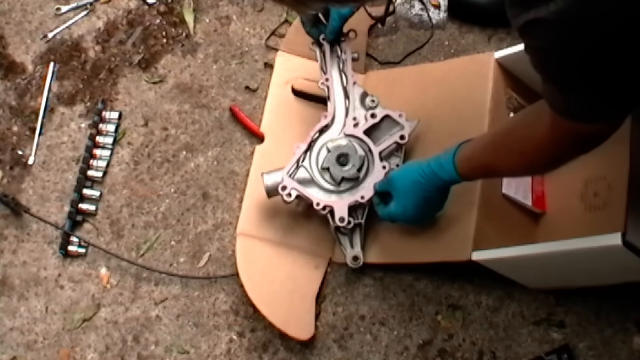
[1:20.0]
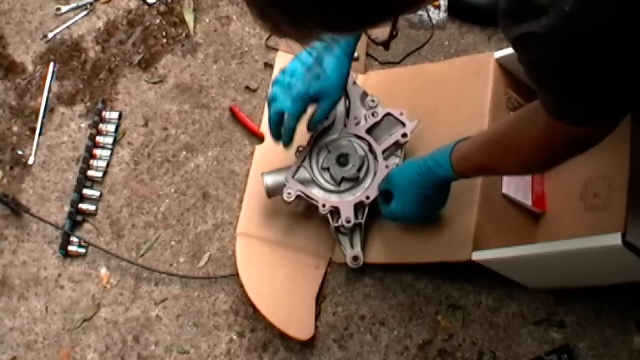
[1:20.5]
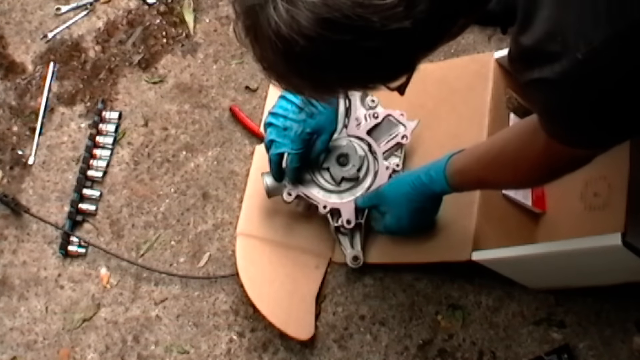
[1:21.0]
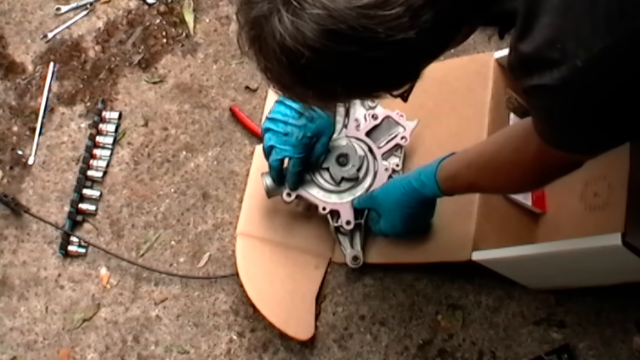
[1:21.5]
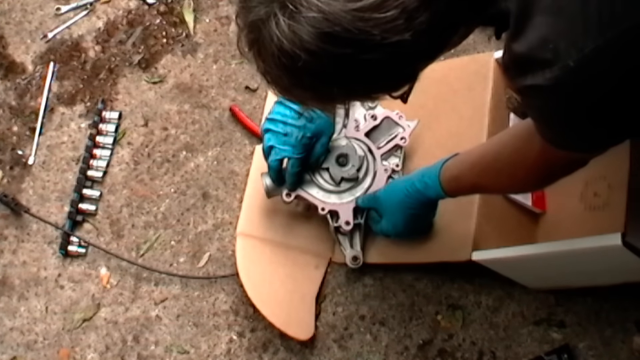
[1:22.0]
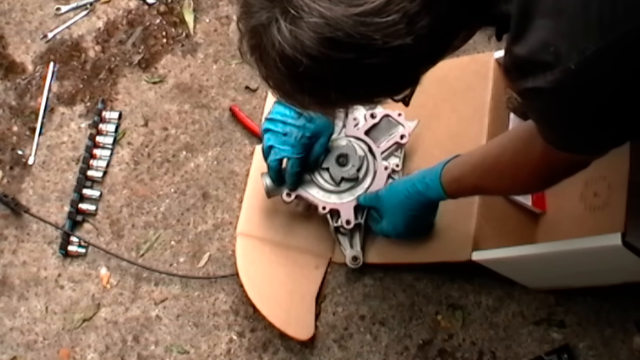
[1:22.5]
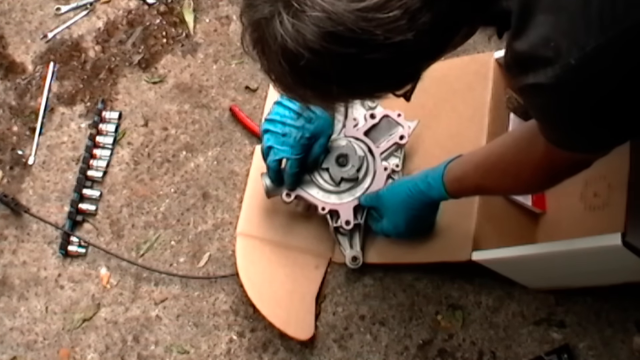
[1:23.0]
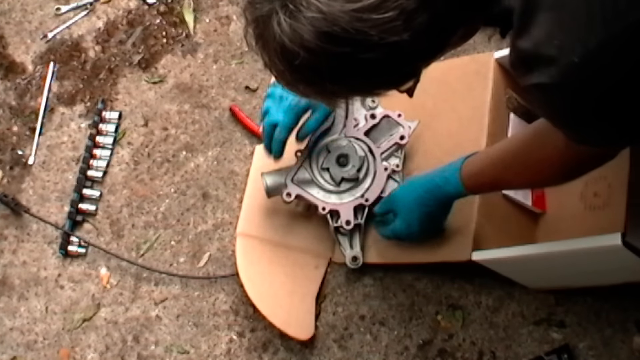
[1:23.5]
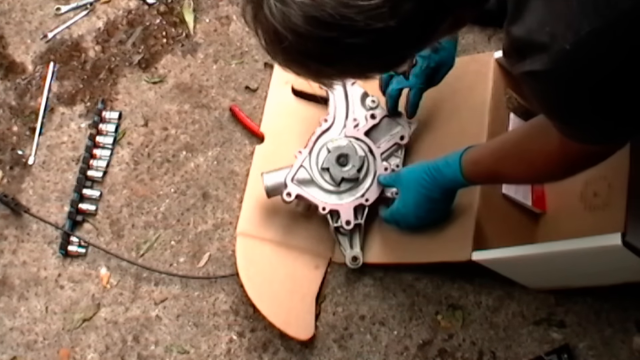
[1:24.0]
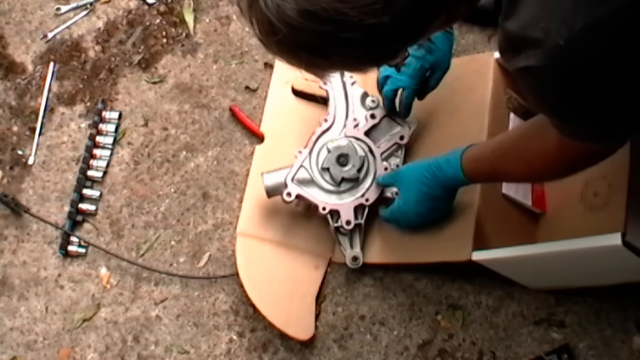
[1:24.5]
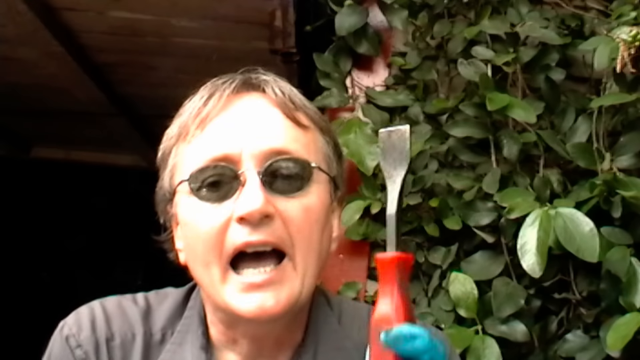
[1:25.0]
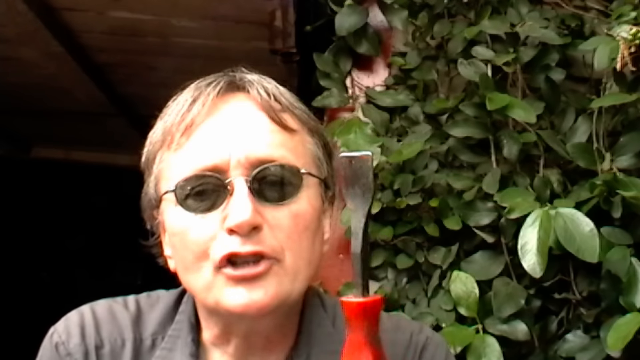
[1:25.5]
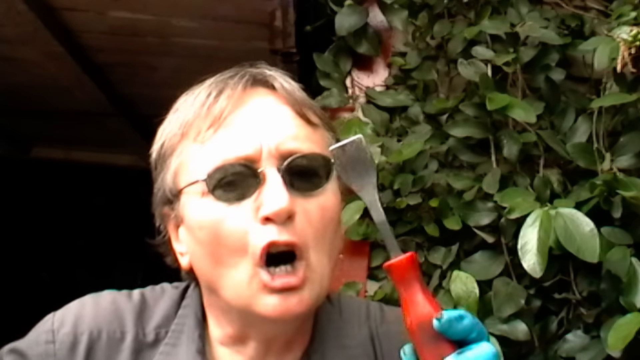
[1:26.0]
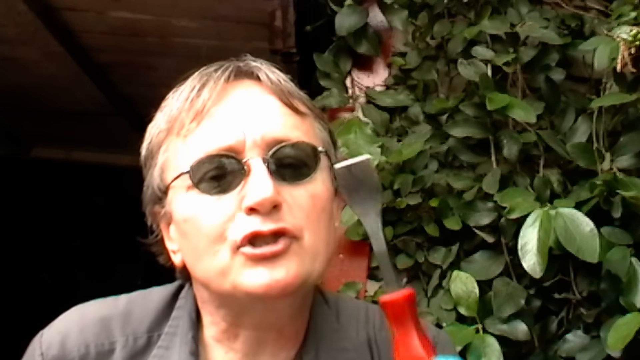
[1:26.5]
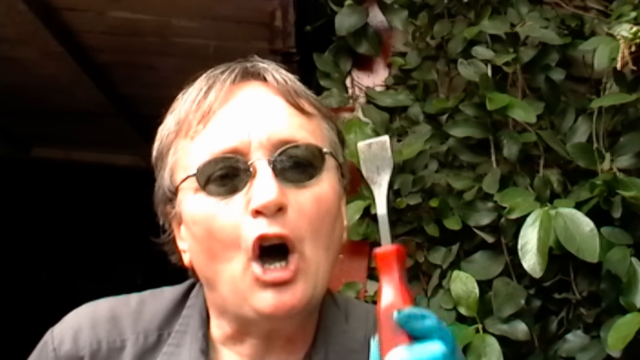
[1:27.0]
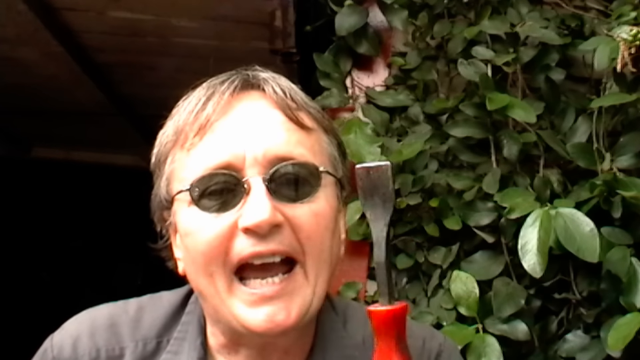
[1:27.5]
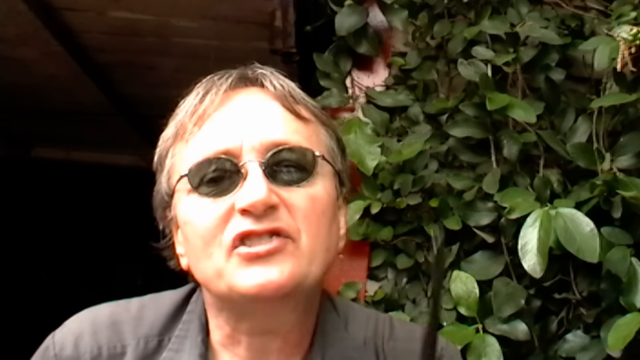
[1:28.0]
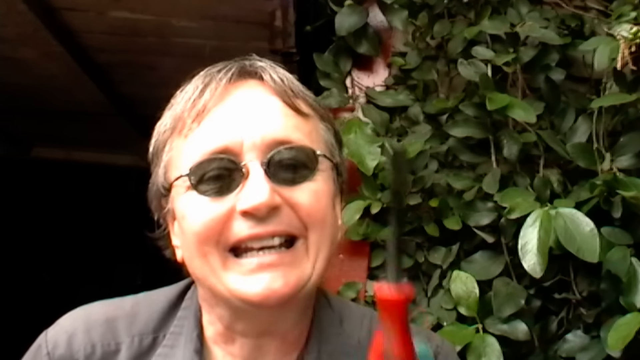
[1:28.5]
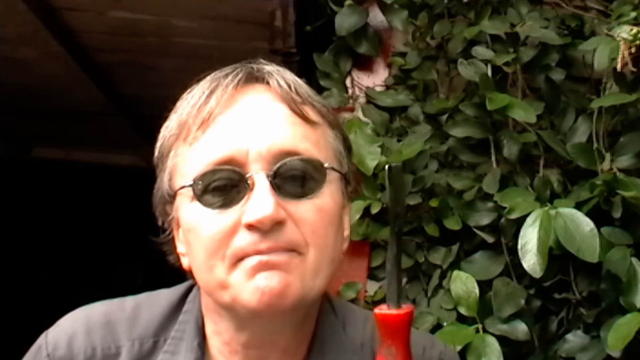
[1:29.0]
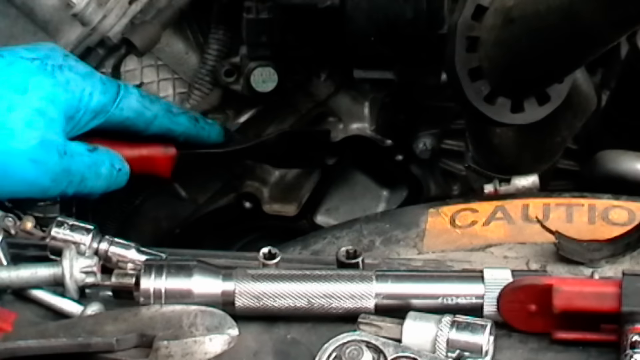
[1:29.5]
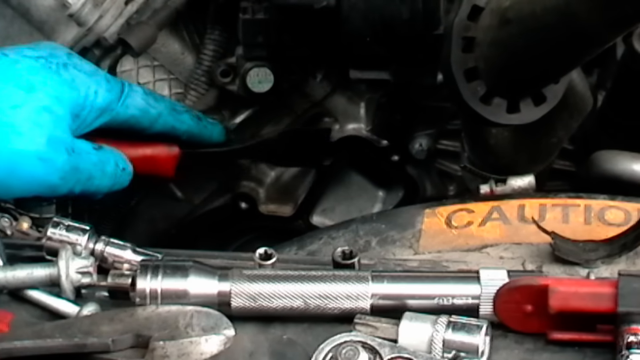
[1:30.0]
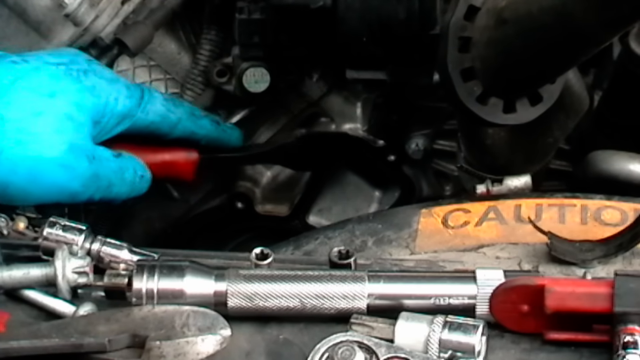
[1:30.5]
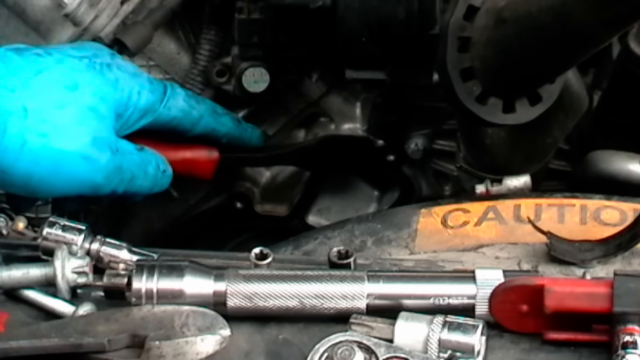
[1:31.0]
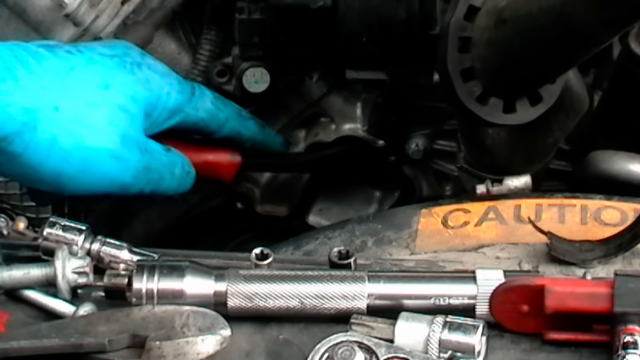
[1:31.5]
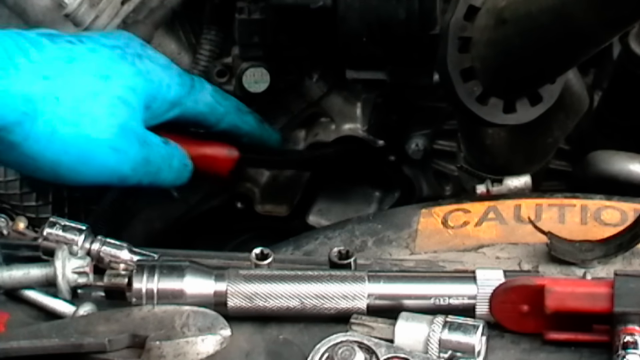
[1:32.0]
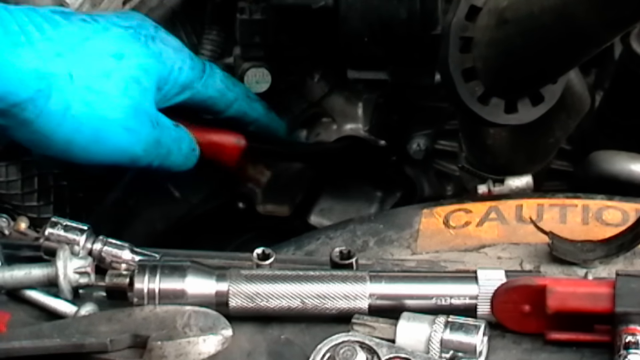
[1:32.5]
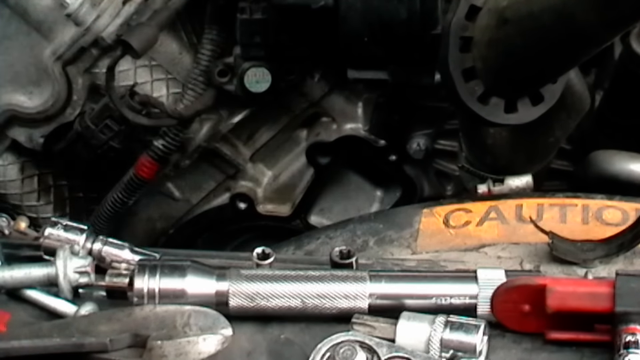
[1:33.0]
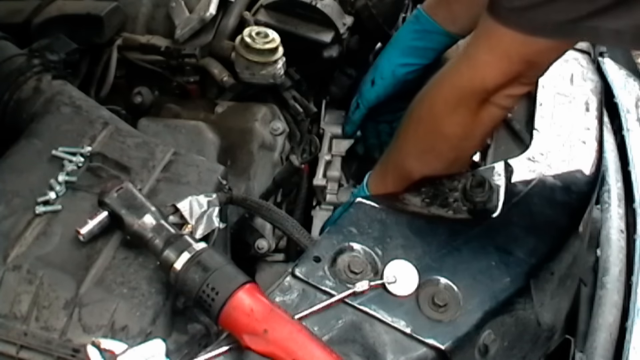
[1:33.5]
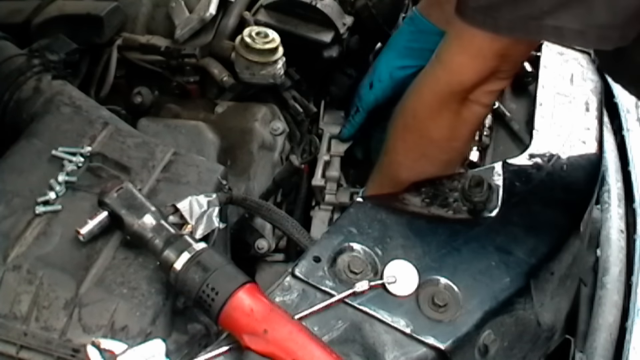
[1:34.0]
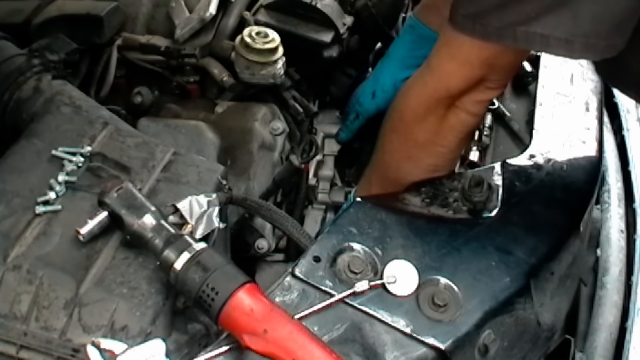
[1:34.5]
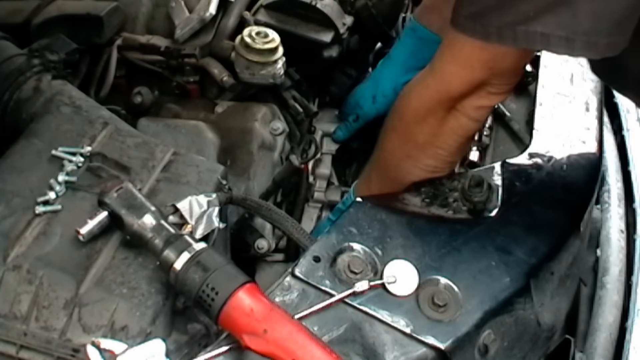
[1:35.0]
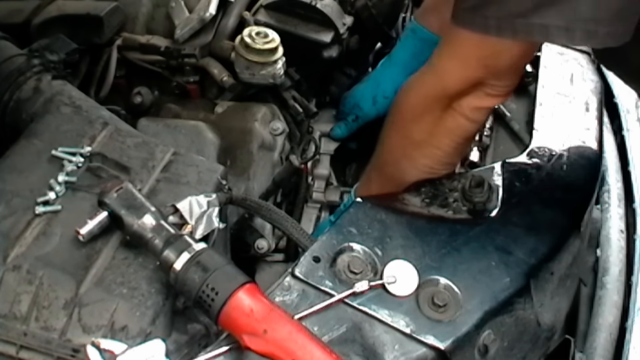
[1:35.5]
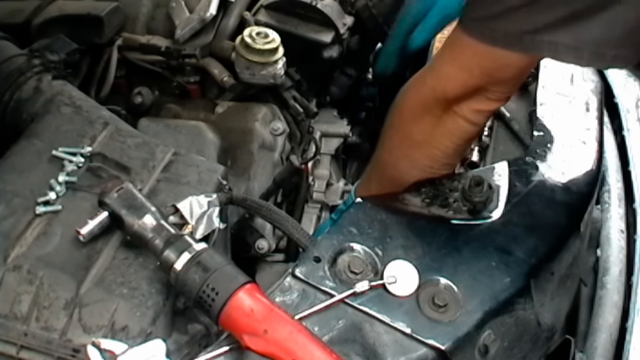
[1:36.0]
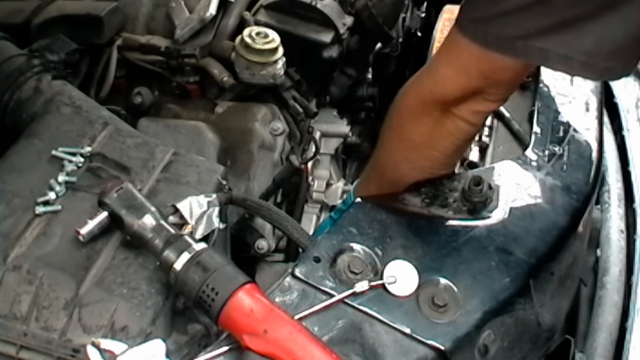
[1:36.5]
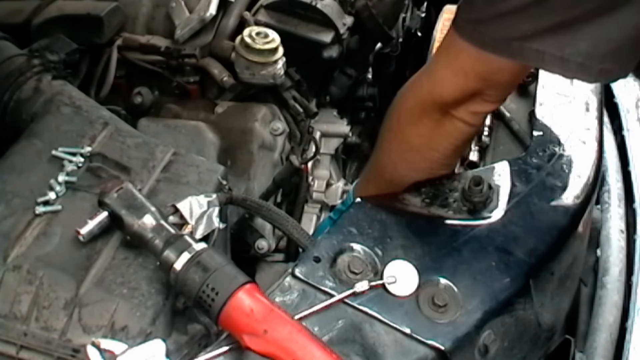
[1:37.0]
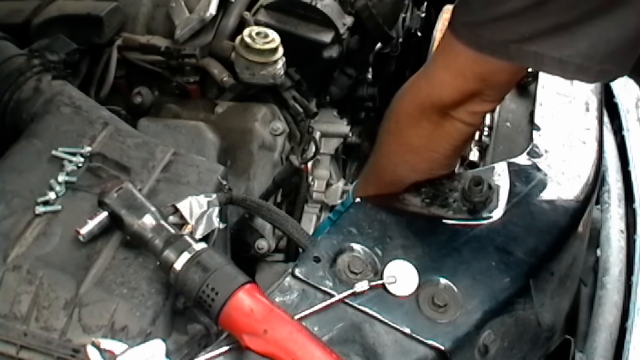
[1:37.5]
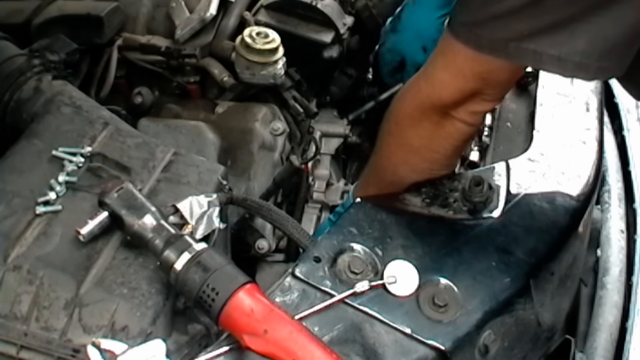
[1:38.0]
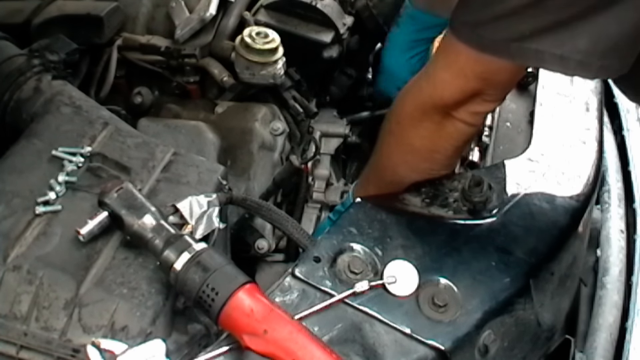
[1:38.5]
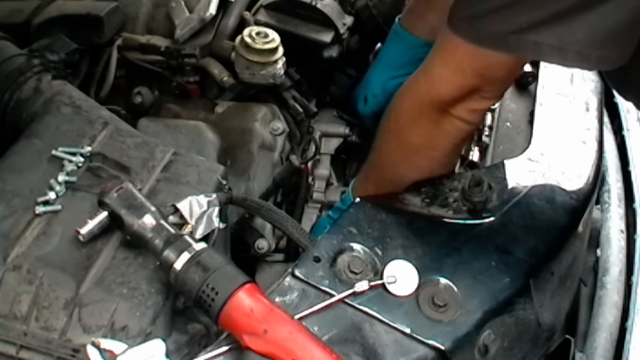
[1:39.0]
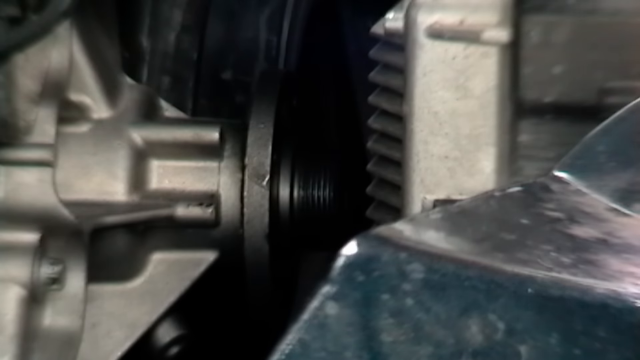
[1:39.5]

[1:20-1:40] A piece of a Mercedes-Benz engine lies on the ground. The person with blue gloves traces the bulky silver engine piece with black adhesive and slowly sticks a flat silver piece onto it, aligning the two perfectly. A man with brown hair and dark sunglasses comes into view, looking as if he is explaining what is being done, and raises what looks like a flathead screwdriver that is black on top with a red handle. The blue-gloved hand is then back inside the vehicle, using what looks like the flathead screwdriver to scrape something from a part. After the scraping, the piece that was glued together on the ground is put back into the vehicle. On top of the engine are several items, including screws and what looks like an electric screwdriver. Parts of the vehicle are being repaired.